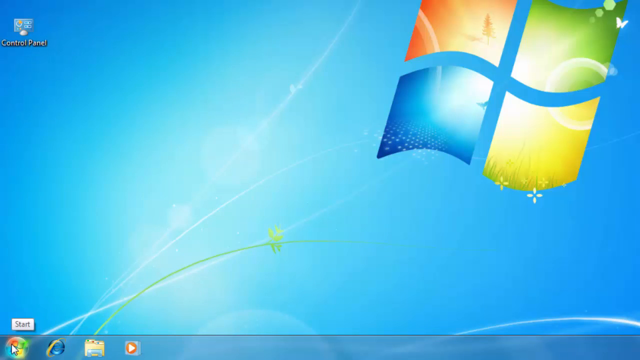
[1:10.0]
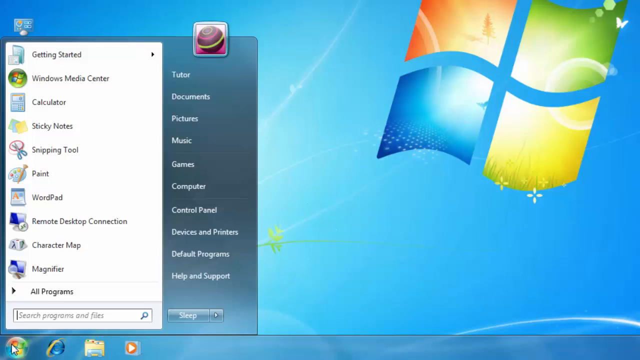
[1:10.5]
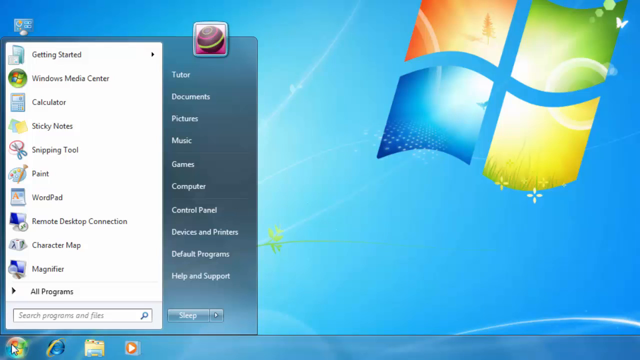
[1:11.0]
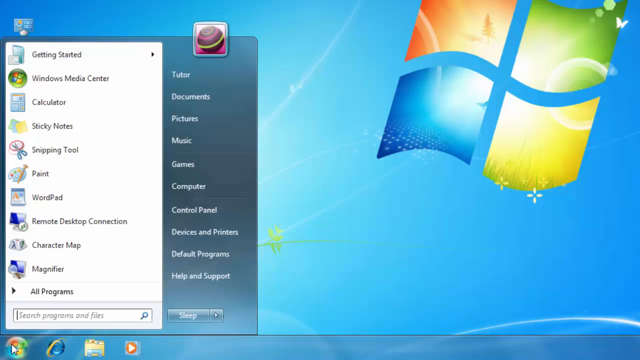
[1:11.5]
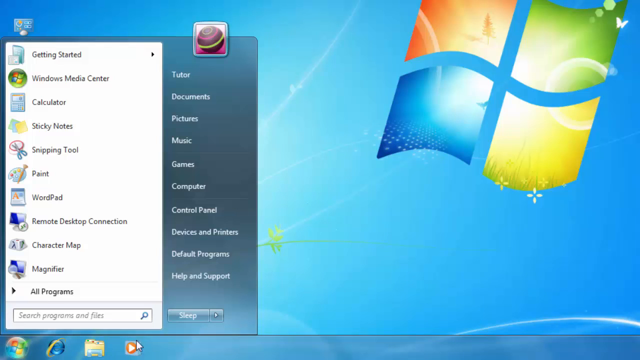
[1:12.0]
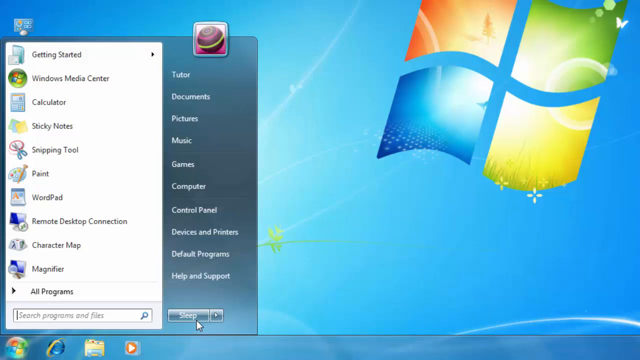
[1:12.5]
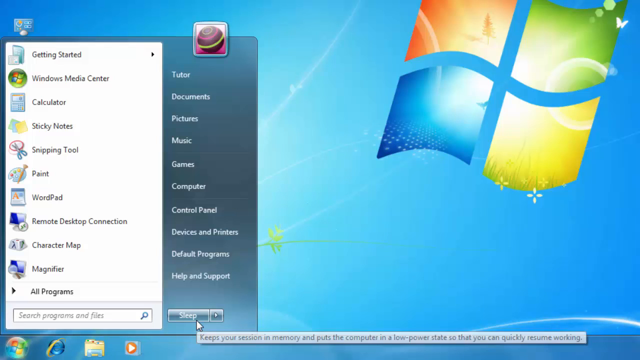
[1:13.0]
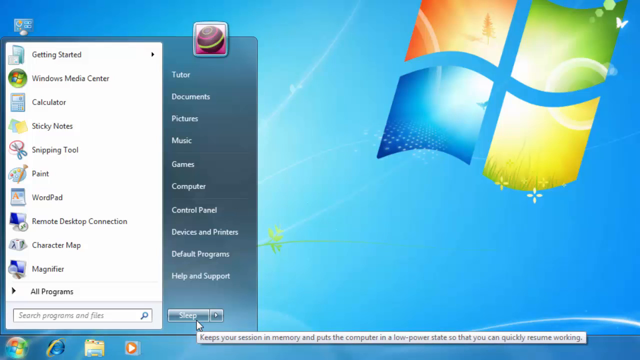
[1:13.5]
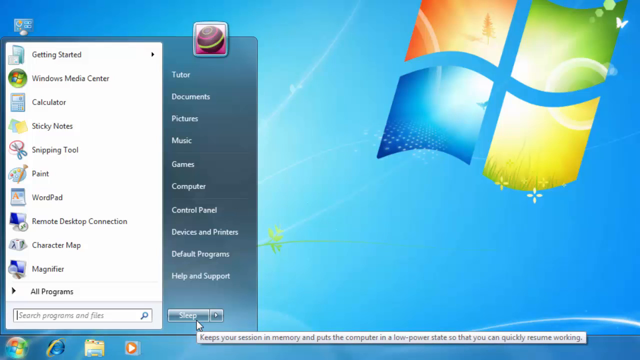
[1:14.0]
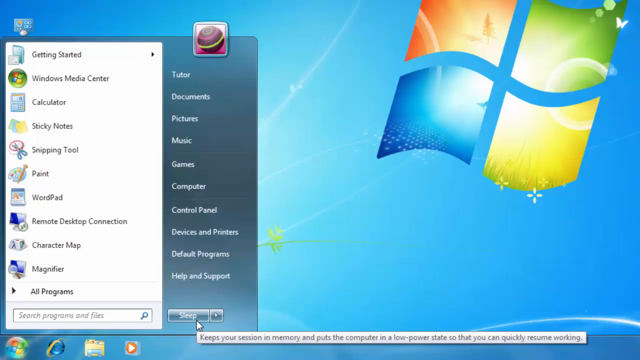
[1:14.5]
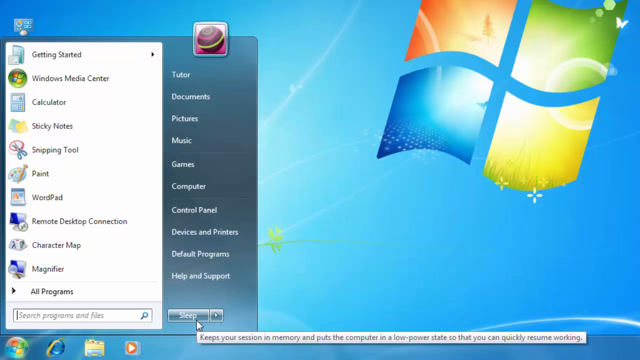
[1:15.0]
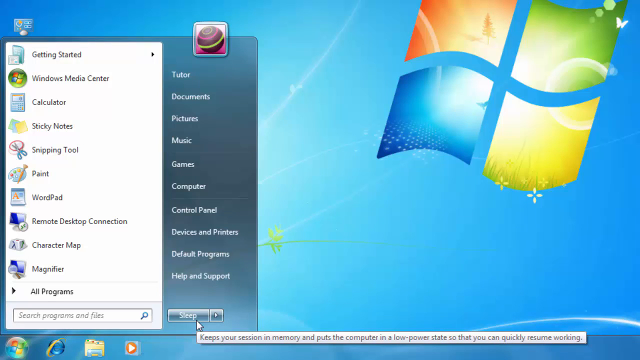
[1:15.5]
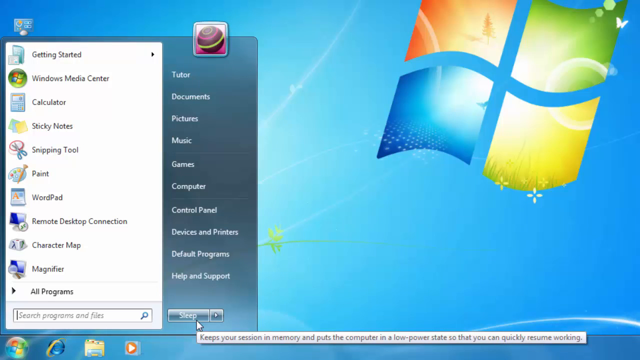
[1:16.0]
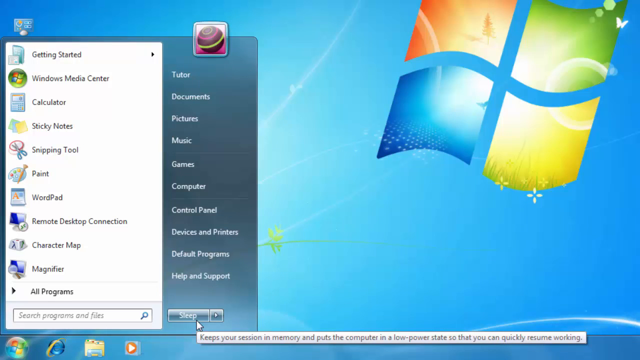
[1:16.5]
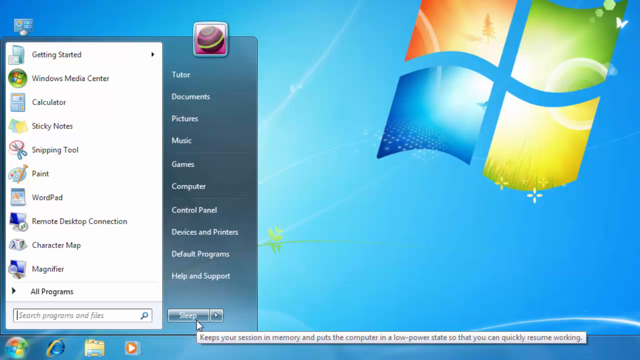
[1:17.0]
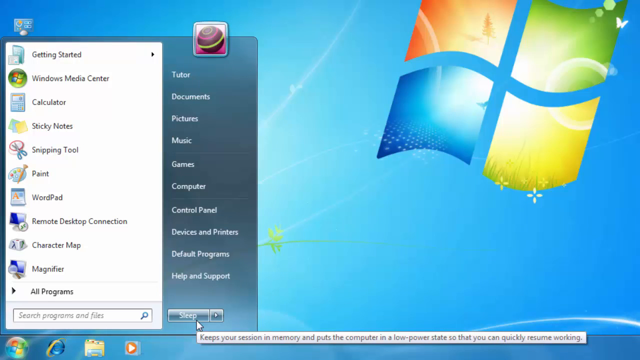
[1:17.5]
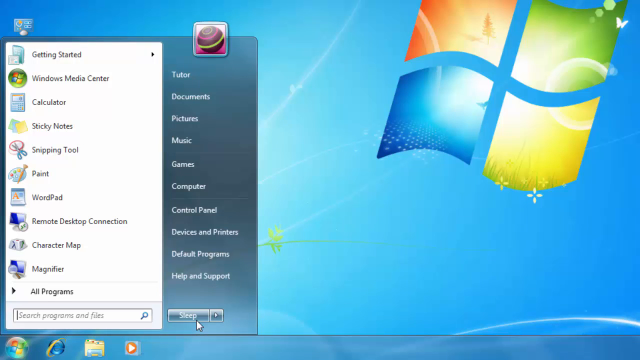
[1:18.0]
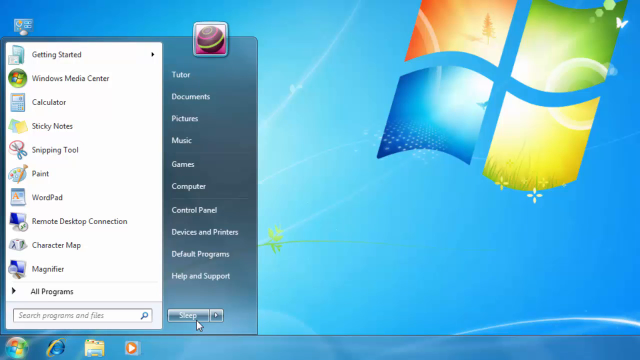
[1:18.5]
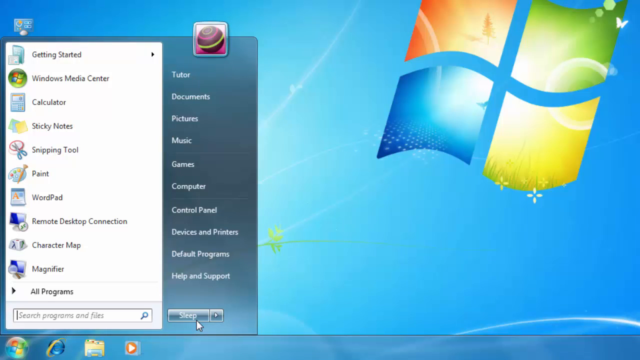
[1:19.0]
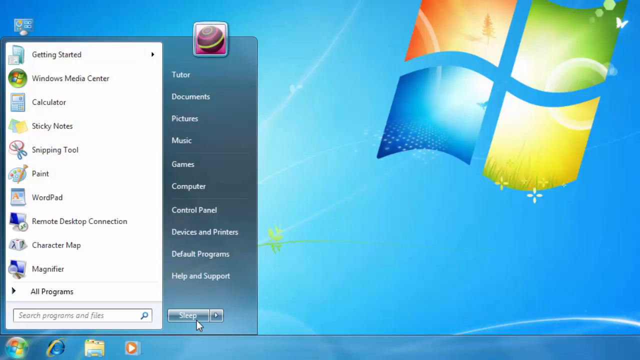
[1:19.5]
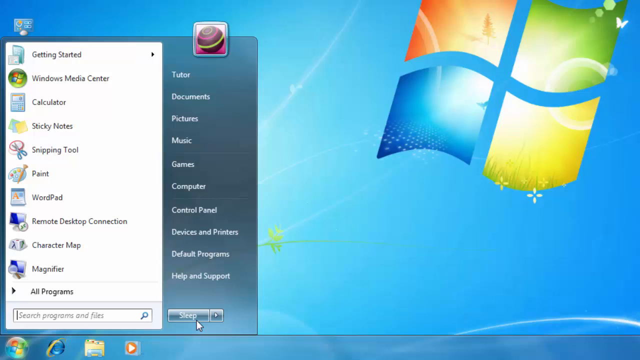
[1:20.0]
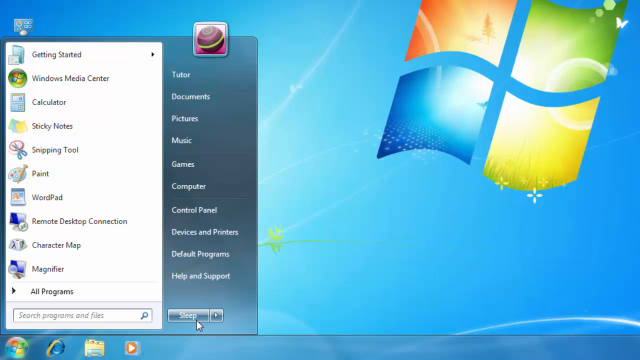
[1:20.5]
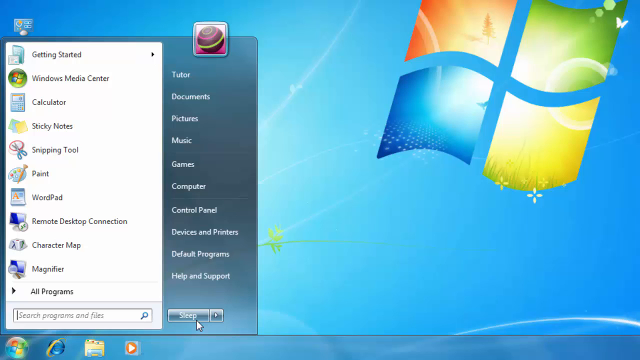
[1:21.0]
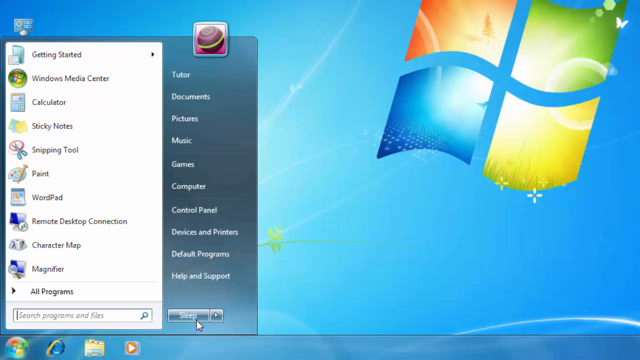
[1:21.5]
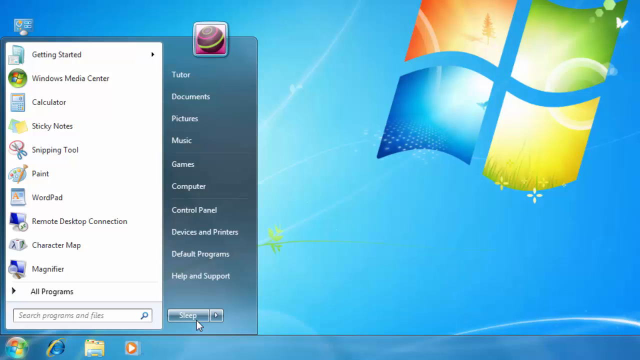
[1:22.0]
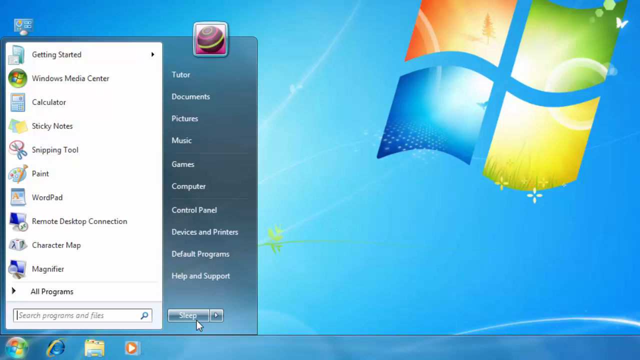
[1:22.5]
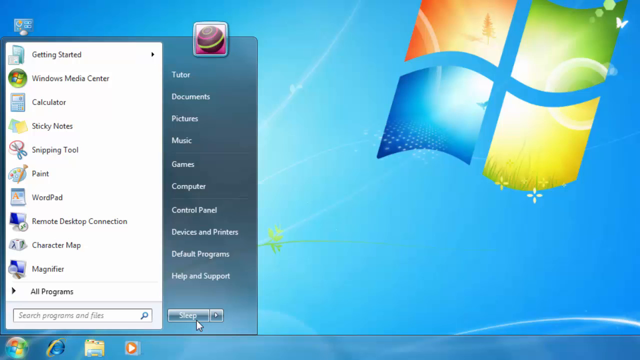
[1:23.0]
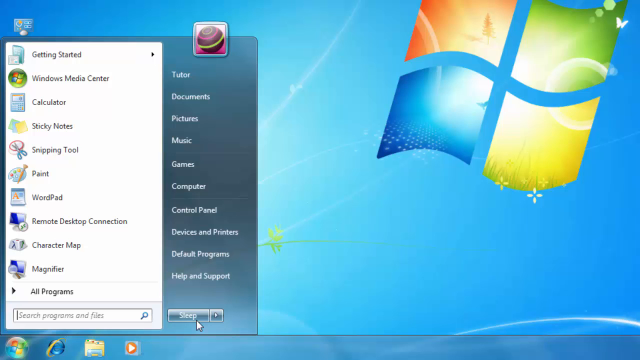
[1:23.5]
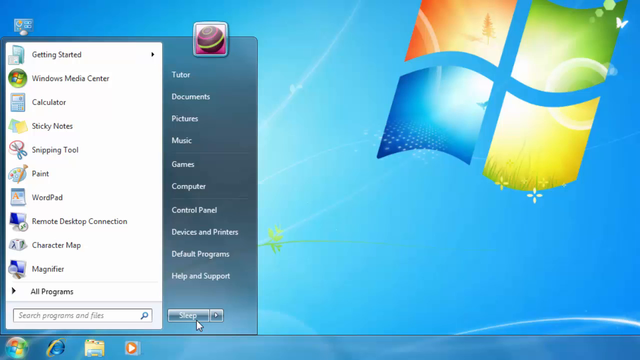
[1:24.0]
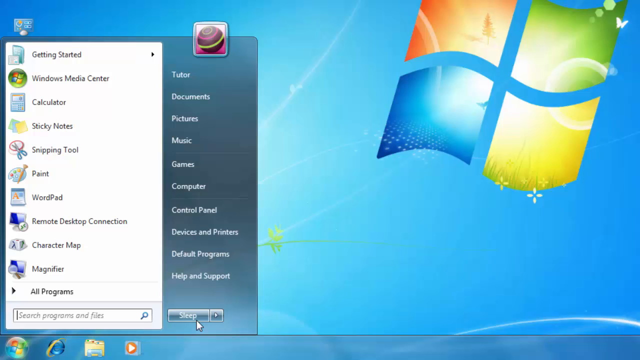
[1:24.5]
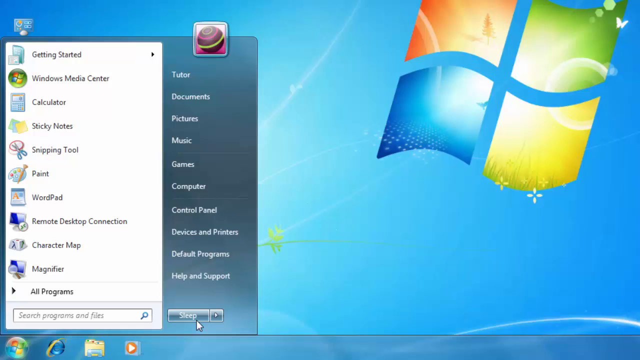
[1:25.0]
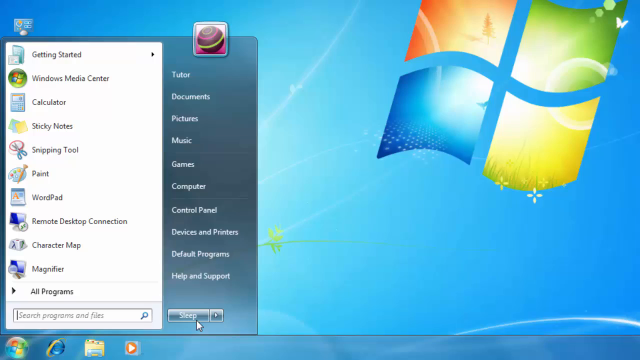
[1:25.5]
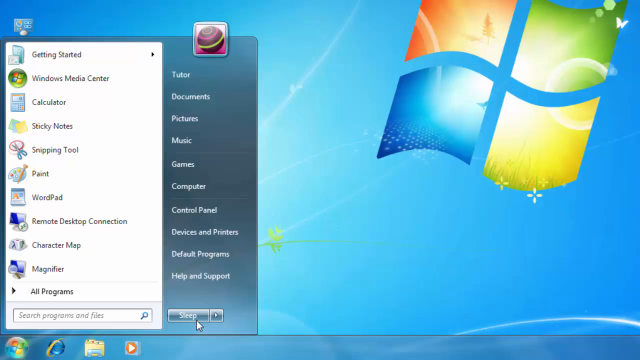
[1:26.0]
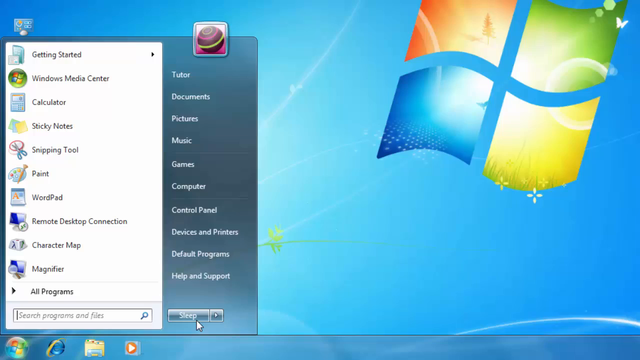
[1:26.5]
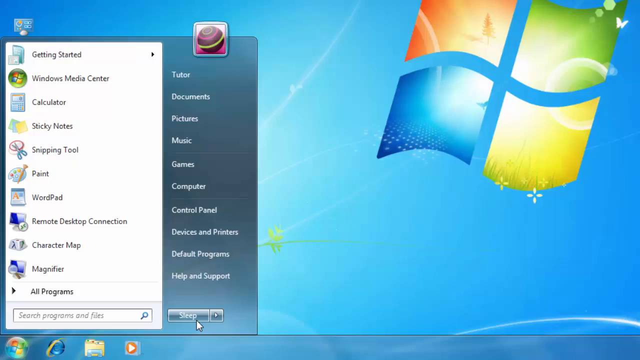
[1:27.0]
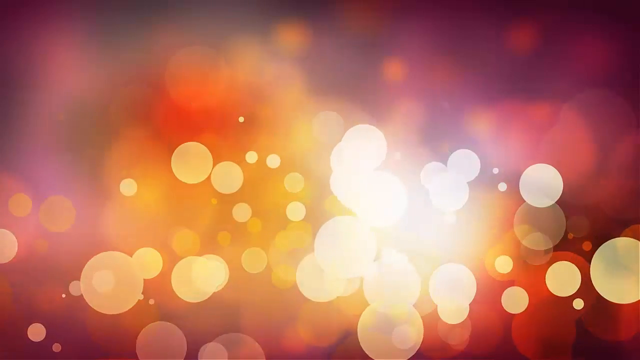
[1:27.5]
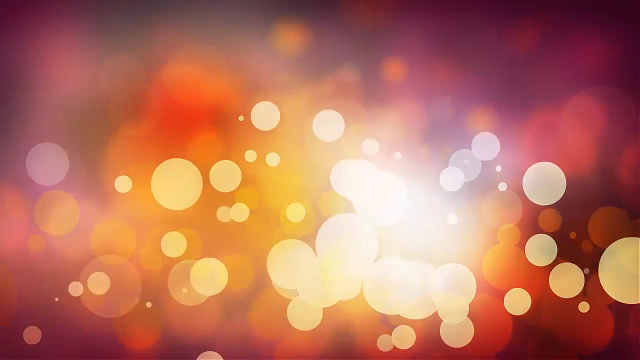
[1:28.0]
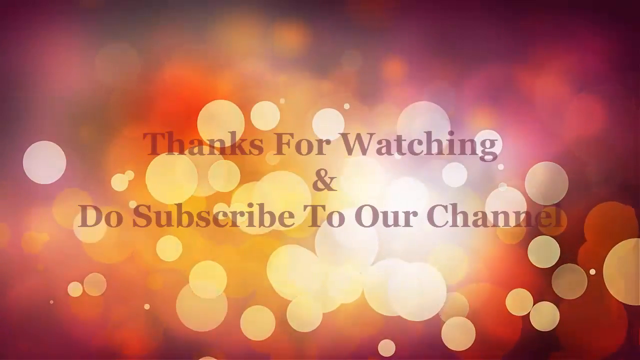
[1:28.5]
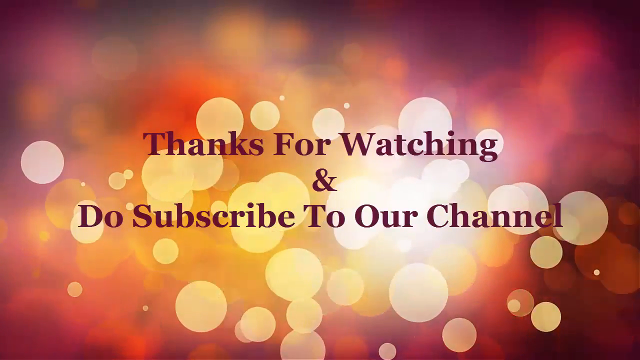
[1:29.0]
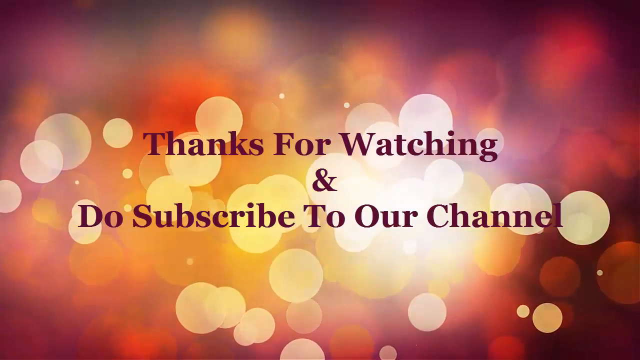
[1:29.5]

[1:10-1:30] Text reads "thanks for watching and do subscribe to our channel". A profile picture of a blue-purple ball is shown, along with Start menu options for Twitter, documents, pictures, music, games, computer, control panel, device printers, default programs, and help and support, as well as getting started, calculator, sticky notes, snipping tool, work pad, remote desktop connection, character map, magnifier and all programs. The person uses the control panel.